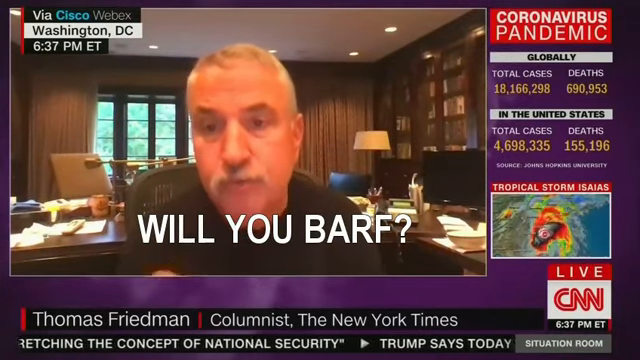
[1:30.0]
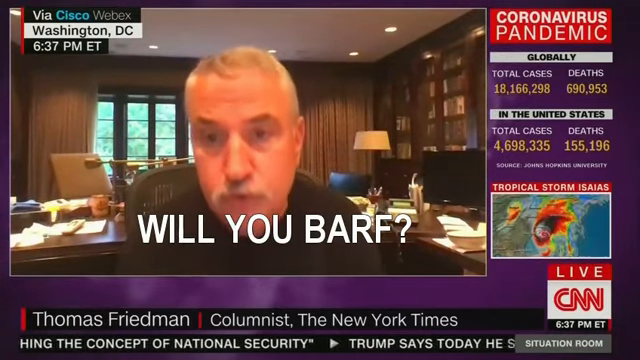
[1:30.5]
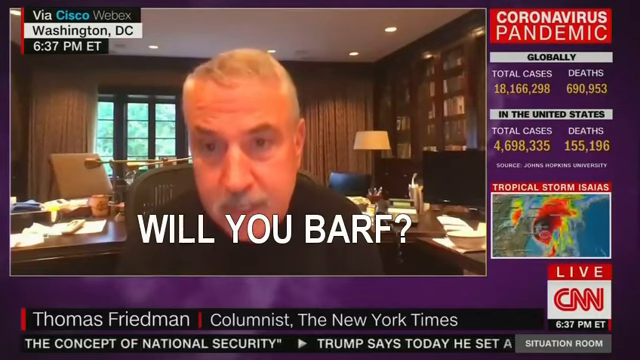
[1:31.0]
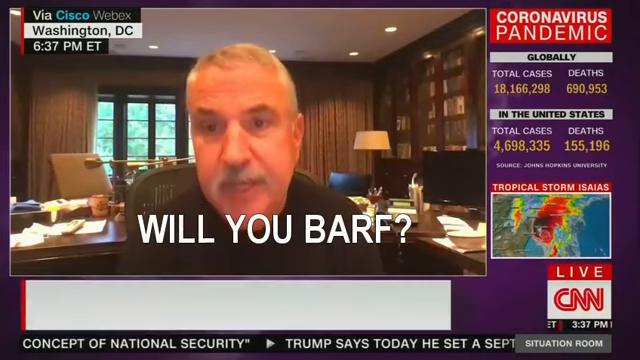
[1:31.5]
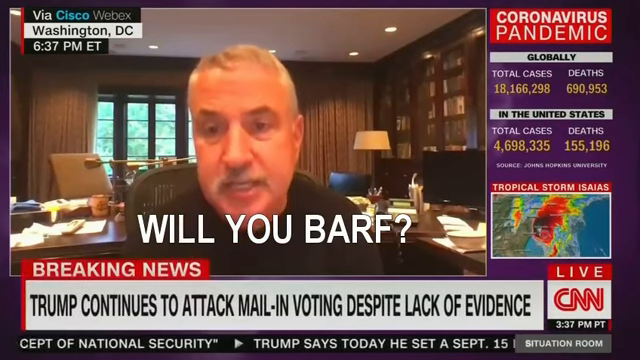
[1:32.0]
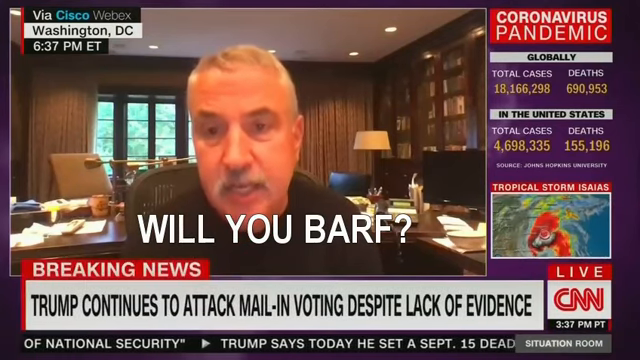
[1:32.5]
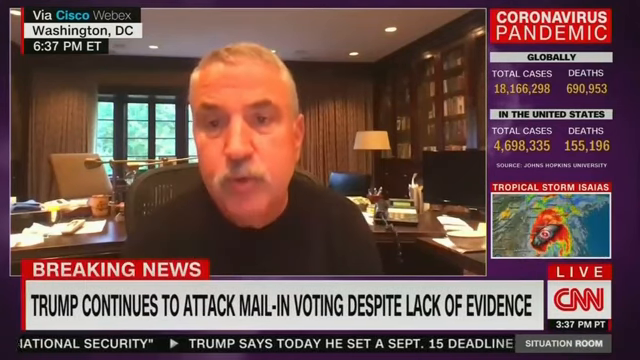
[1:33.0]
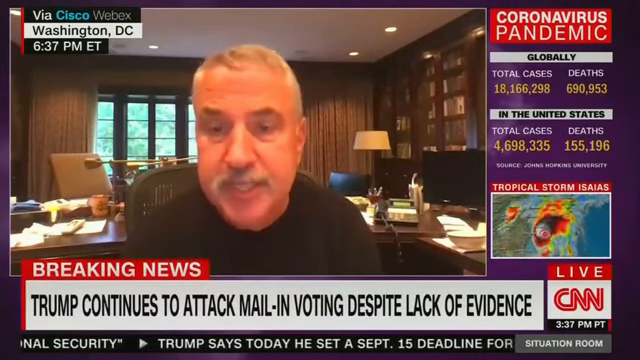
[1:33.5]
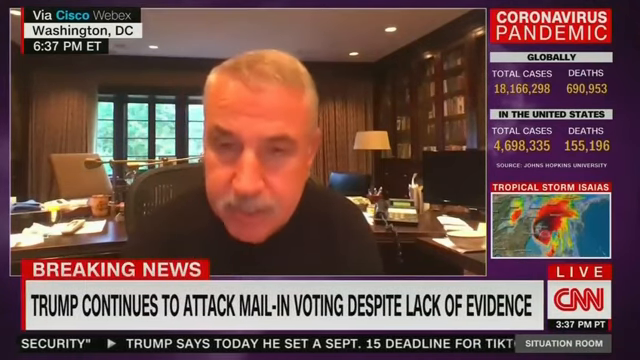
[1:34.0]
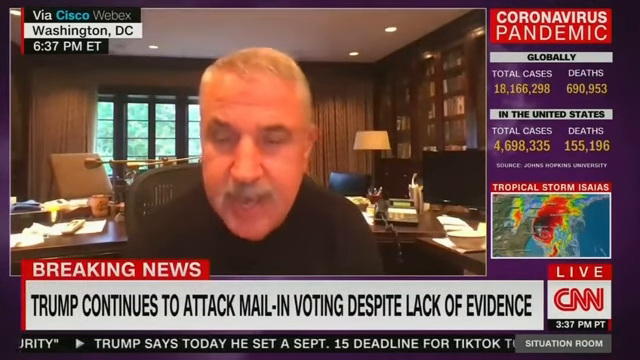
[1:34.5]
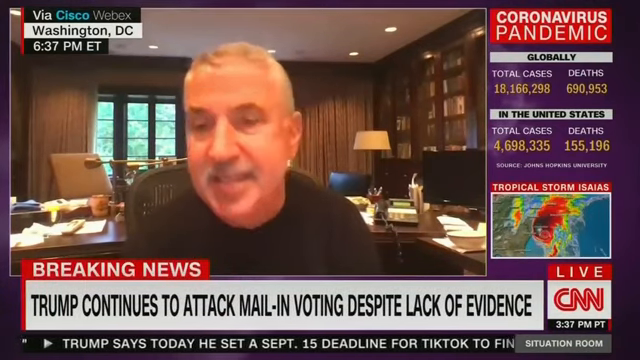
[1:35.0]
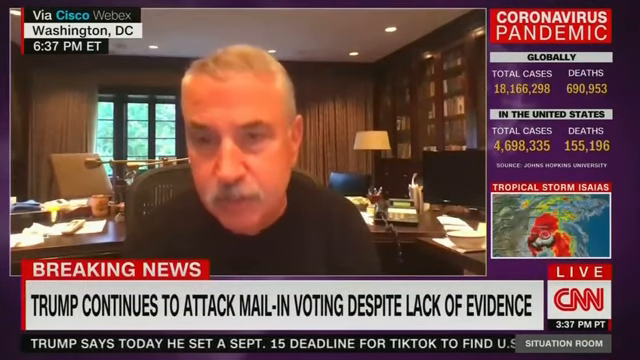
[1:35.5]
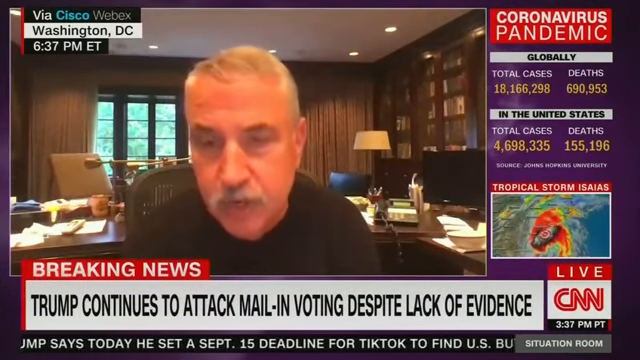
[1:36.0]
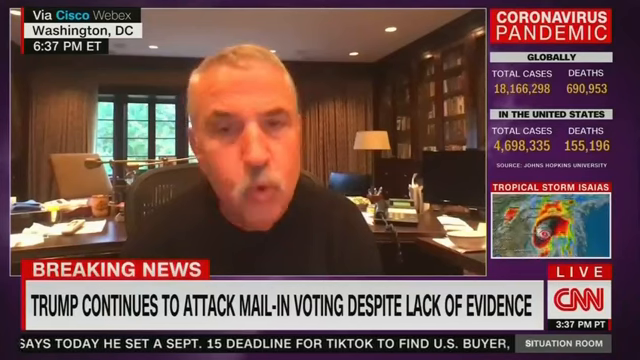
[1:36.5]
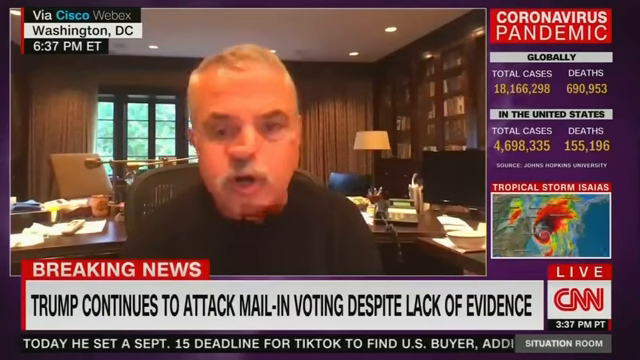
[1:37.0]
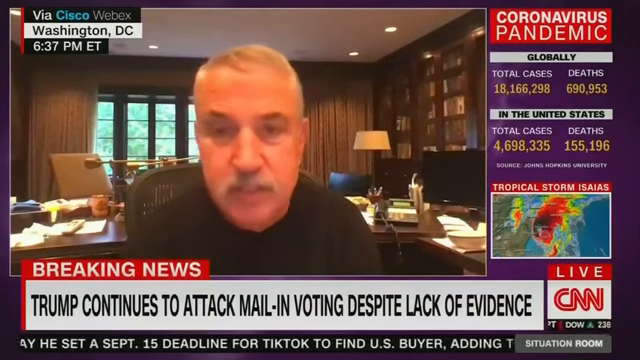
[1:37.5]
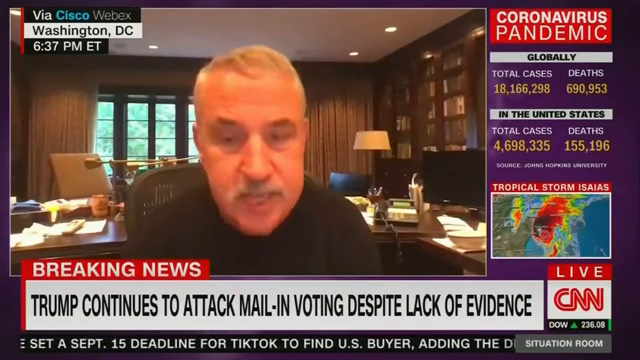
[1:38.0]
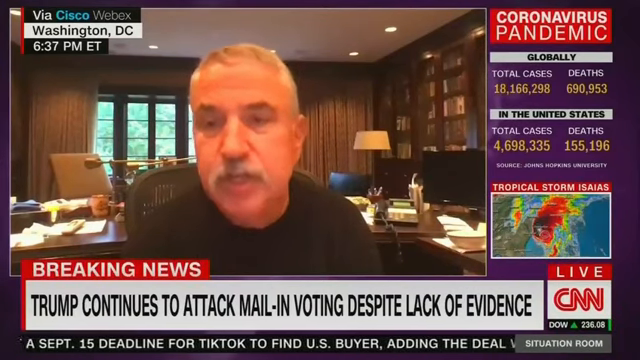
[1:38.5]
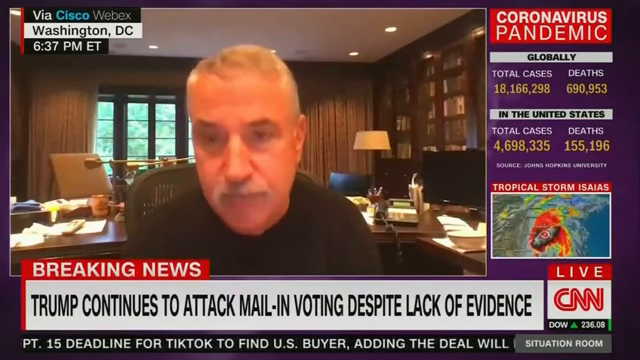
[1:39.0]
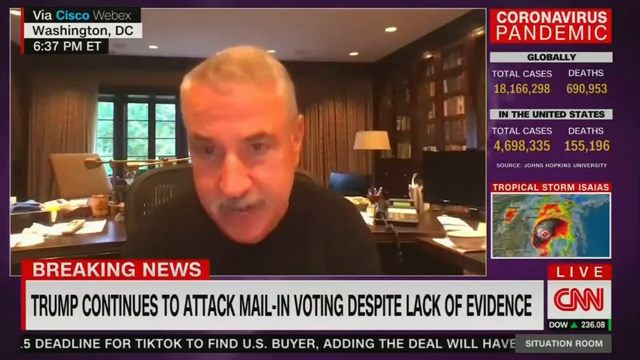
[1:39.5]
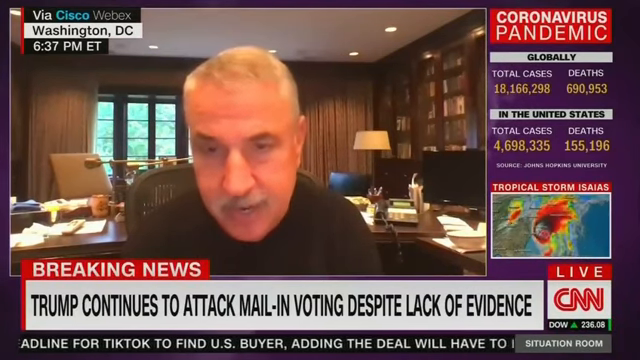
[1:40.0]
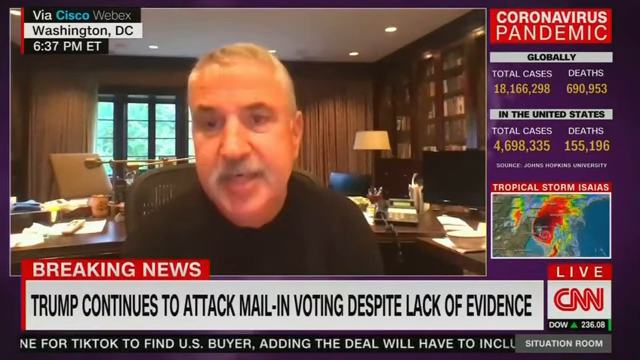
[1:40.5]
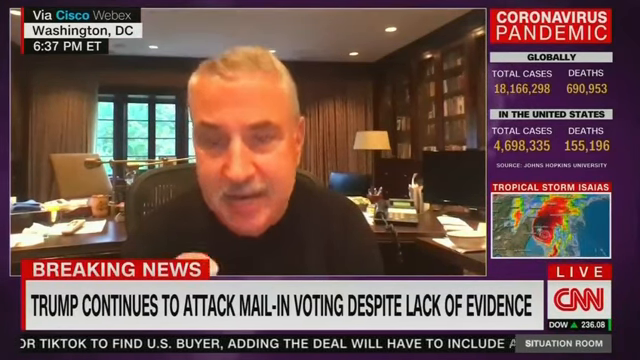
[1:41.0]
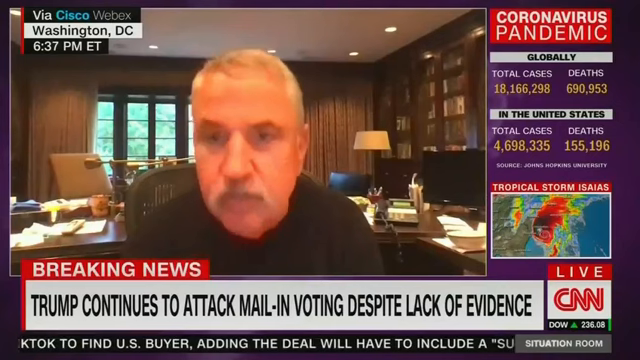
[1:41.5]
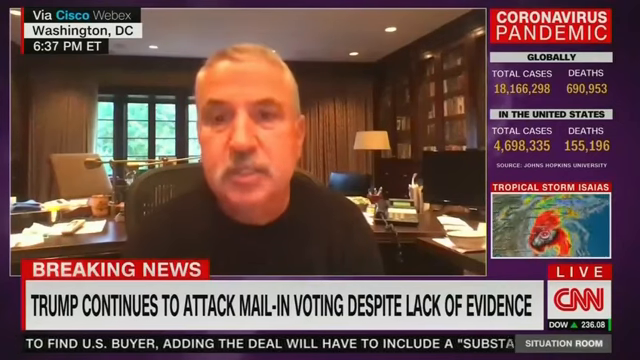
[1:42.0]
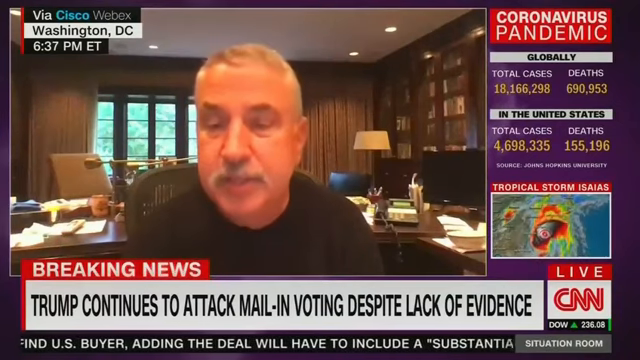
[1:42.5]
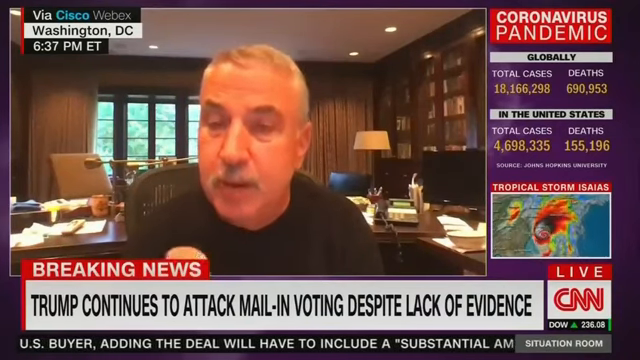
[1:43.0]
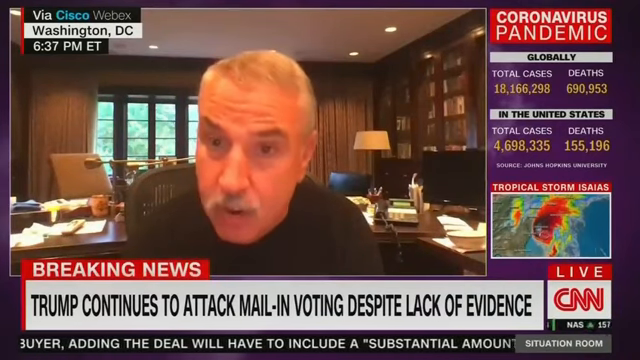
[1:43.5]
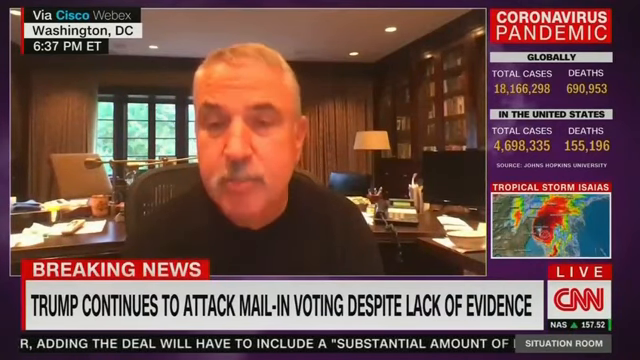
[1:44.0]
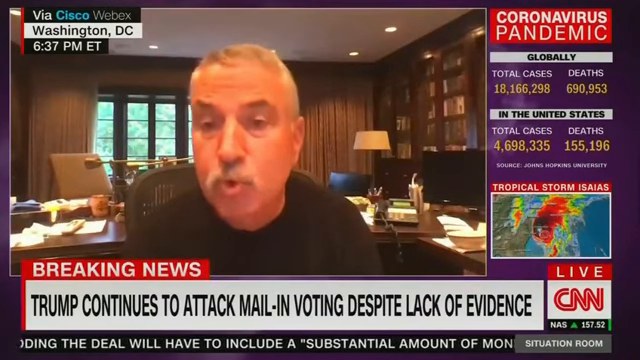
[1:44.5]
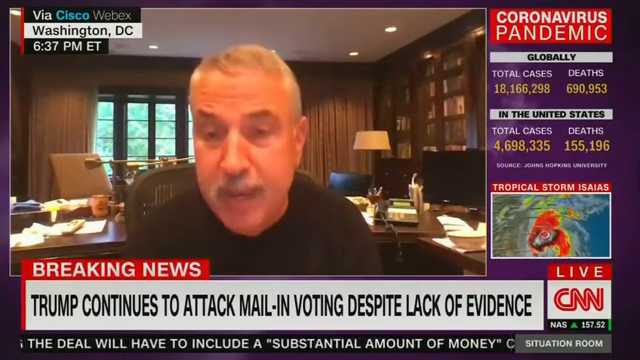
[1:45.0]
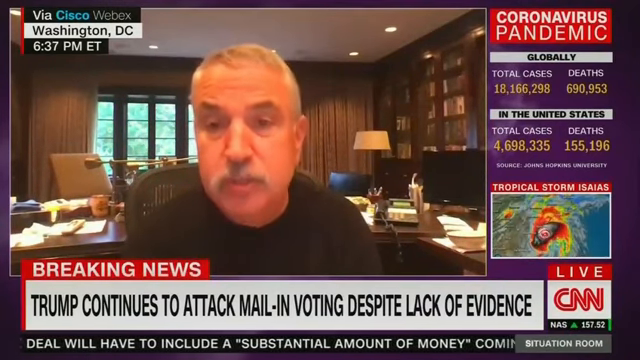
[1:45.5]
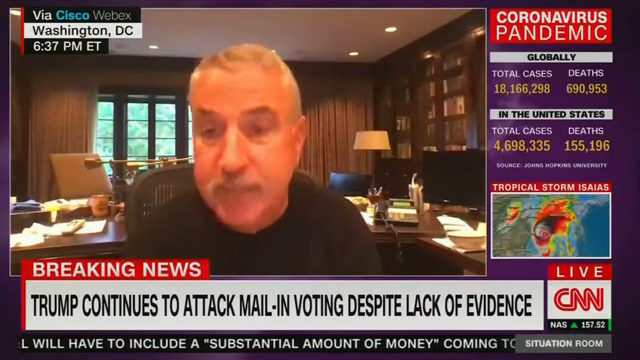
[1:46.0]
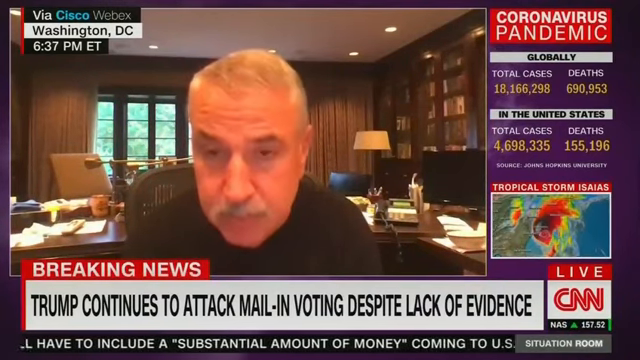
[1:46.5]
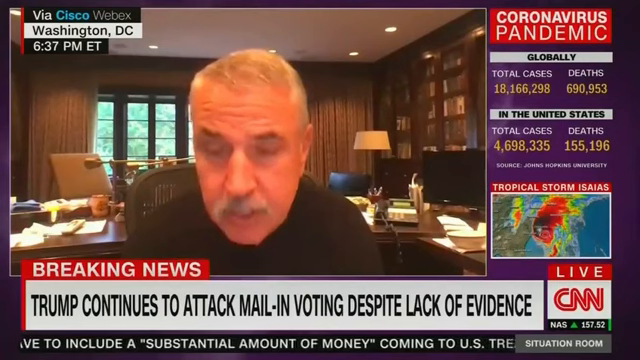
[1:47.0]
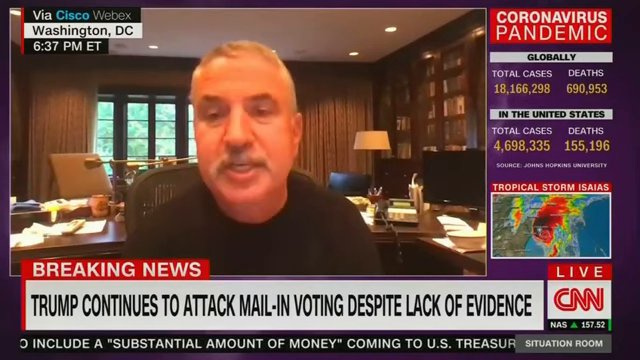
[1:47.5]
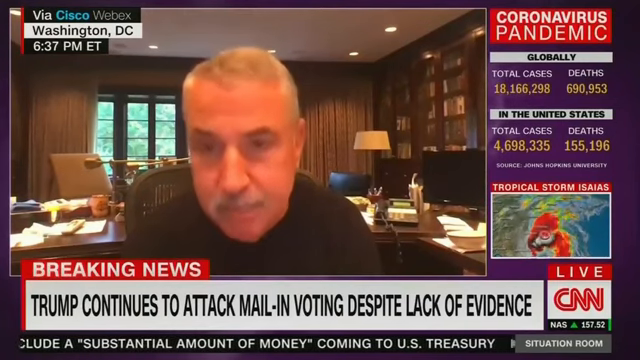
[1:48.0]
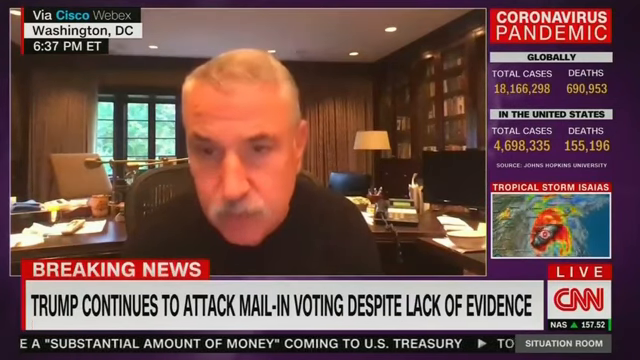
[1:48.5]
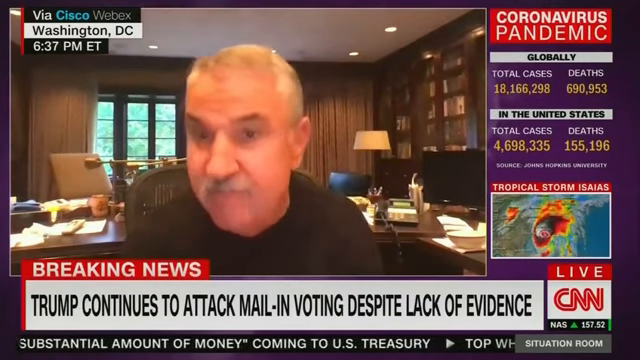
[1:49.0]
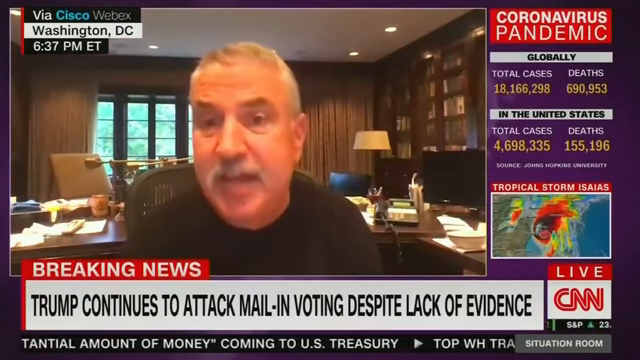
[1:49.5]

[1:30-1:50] The man, apparently in Washington DC and in something like his home office, appears with the time 6:37 PM shown. He is a Caucasian man in a black top. On-screen text reads "will you barf?" in white letters. He is identified as Thomas Friedman, a columnist from the New York Times. Text reads "coronavirus pandemic globally" with total cases and deaths, plus total cases and deaths in the United States, from CNN. It also seems that tropical storm Isaias is being tracked. A breaking news banner reads "Trump continues to attack mail-in voting despite lack of evidence." News runs across the bottom of the screen, and the program appears to be The Situation Room with Wolf Blitzer.